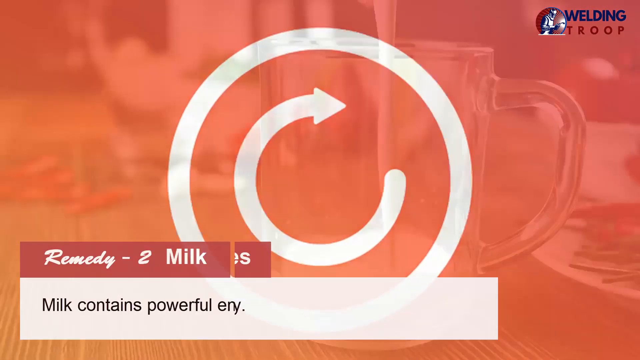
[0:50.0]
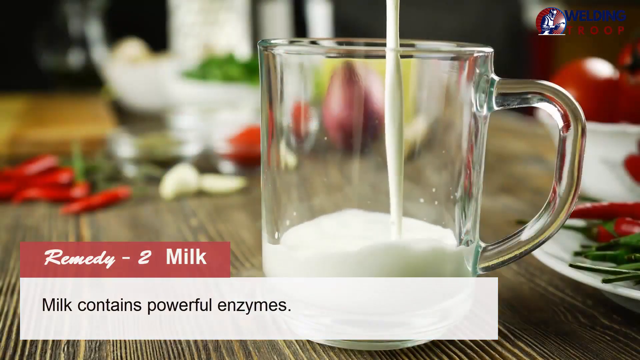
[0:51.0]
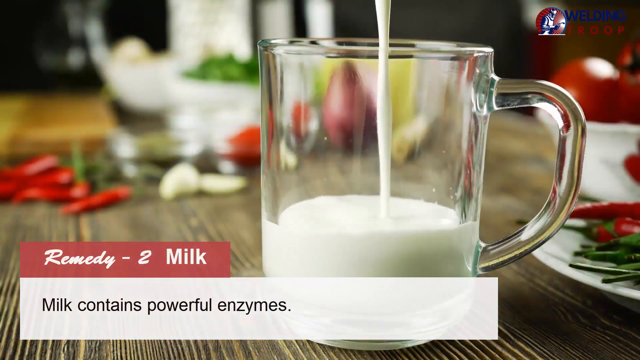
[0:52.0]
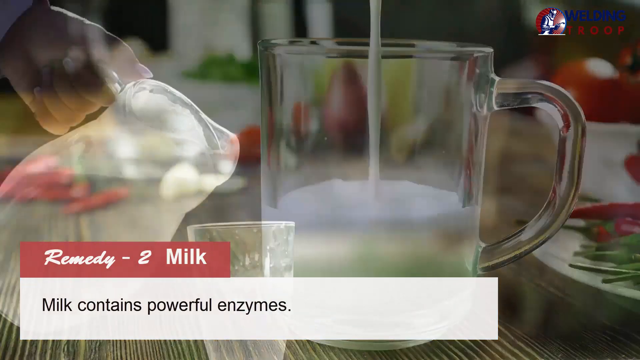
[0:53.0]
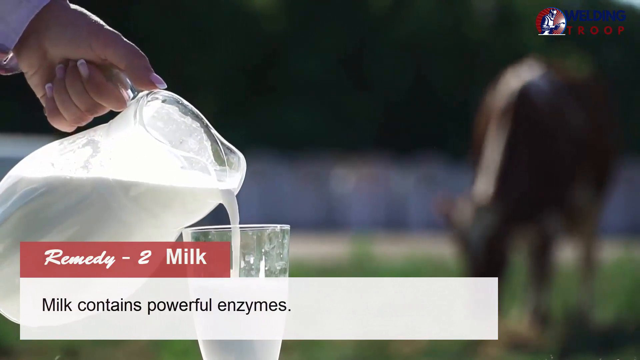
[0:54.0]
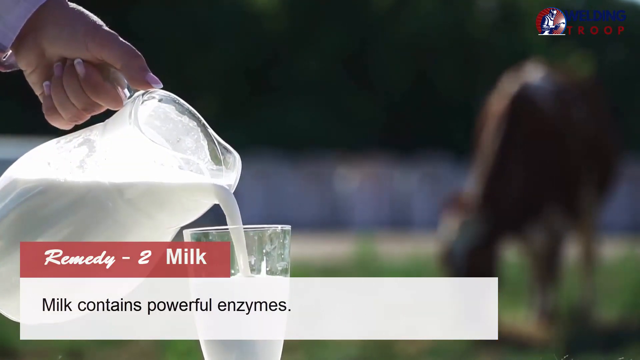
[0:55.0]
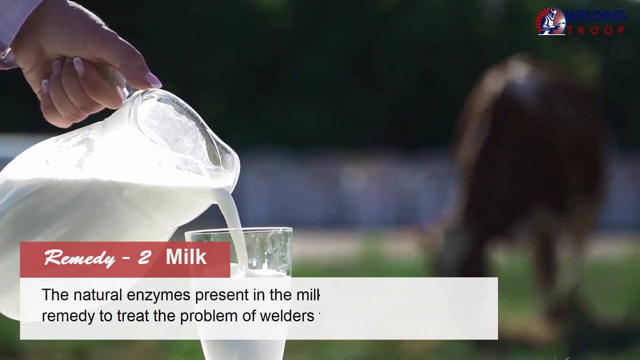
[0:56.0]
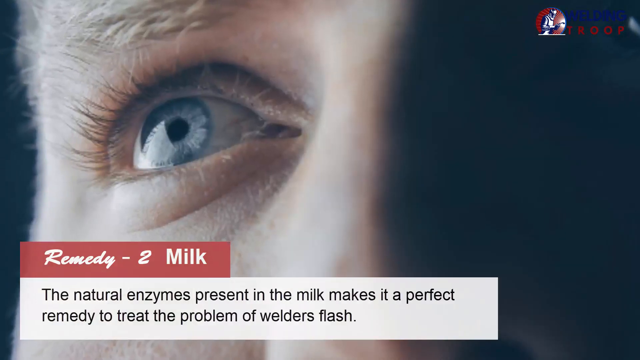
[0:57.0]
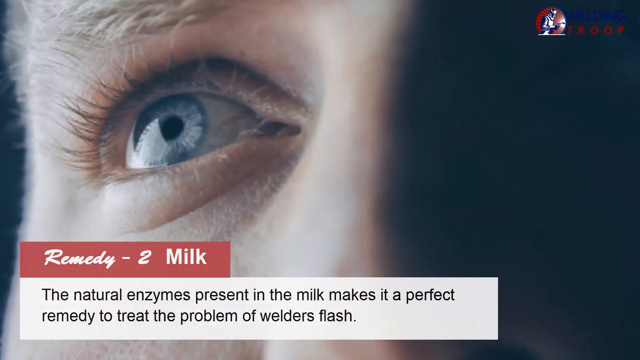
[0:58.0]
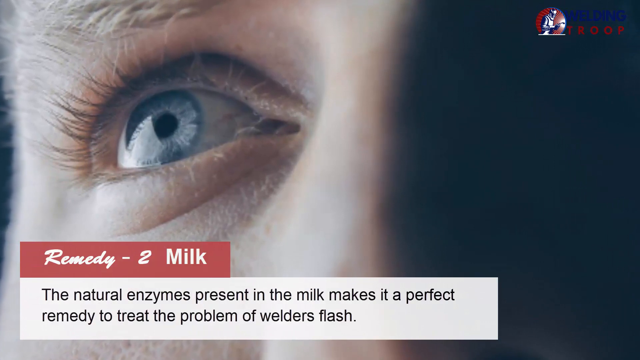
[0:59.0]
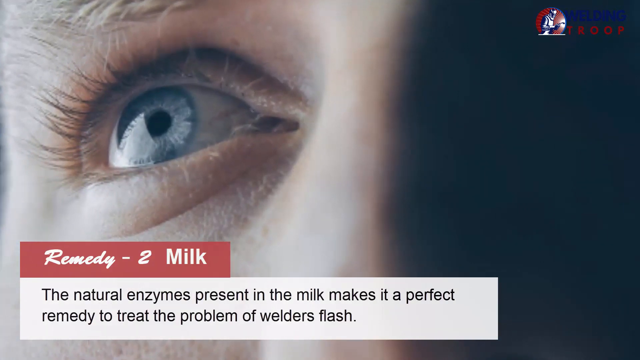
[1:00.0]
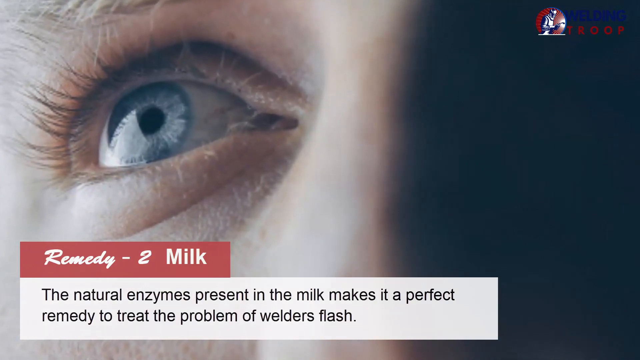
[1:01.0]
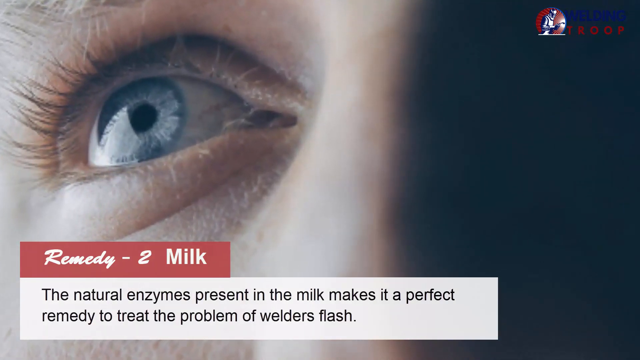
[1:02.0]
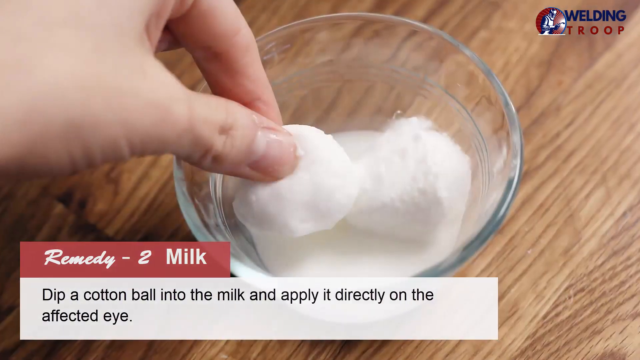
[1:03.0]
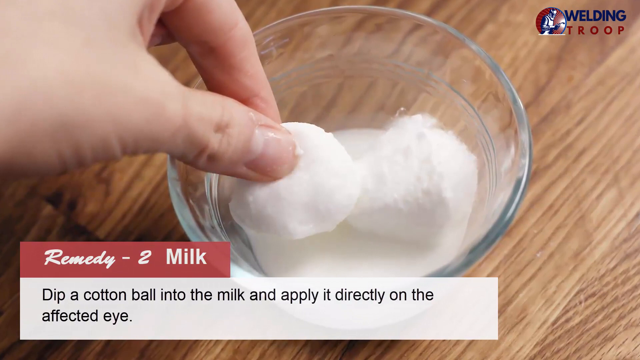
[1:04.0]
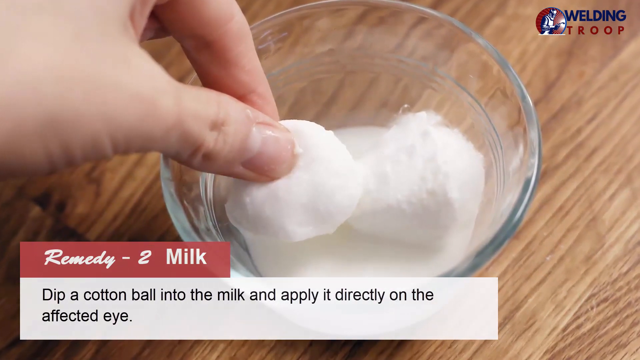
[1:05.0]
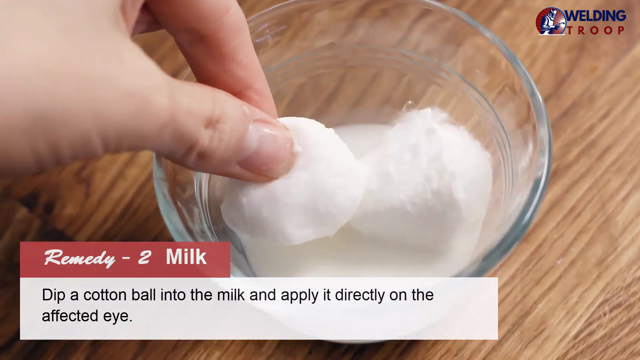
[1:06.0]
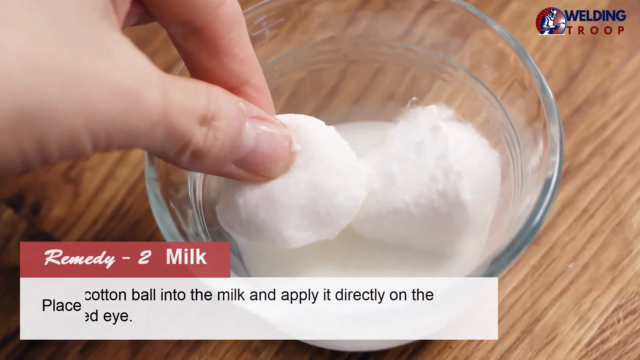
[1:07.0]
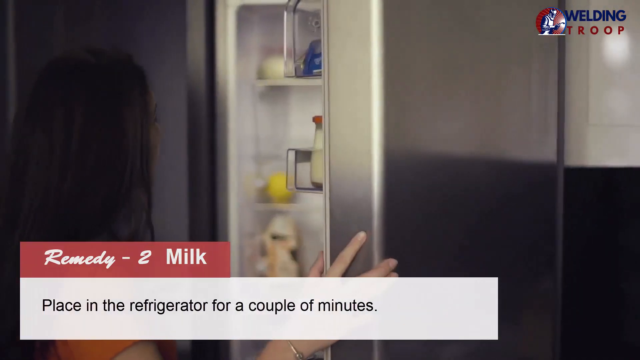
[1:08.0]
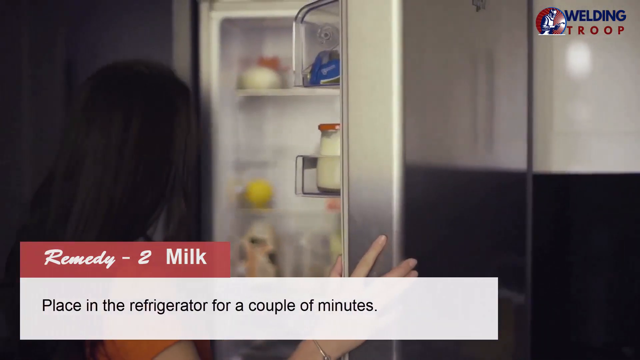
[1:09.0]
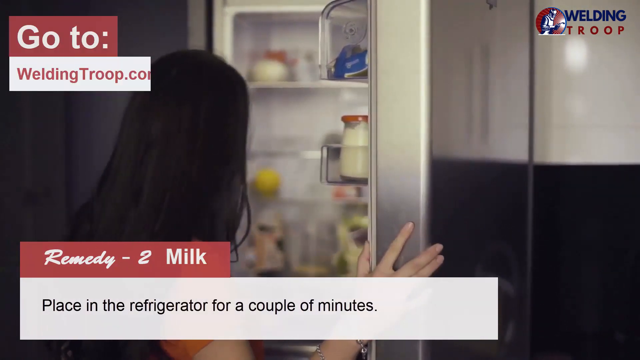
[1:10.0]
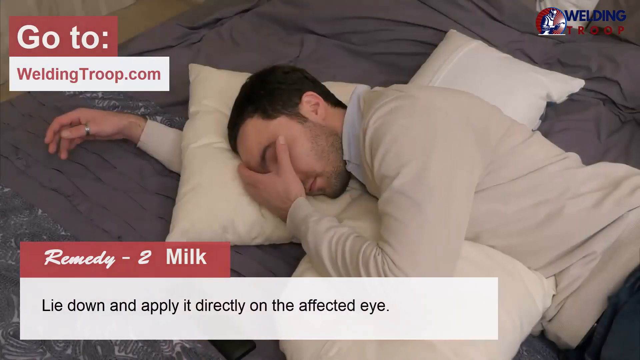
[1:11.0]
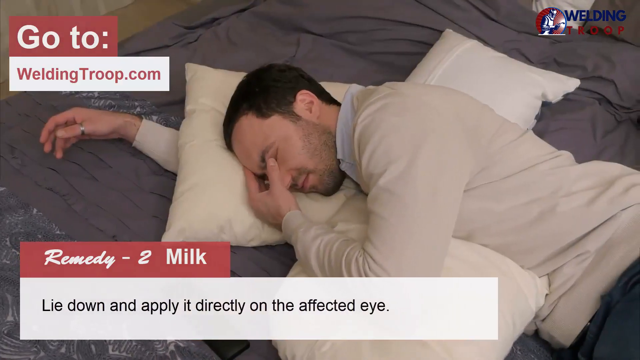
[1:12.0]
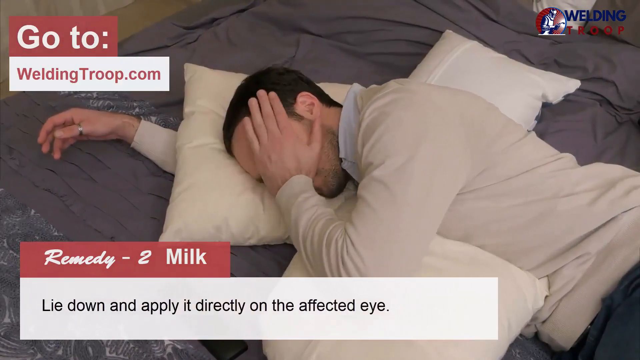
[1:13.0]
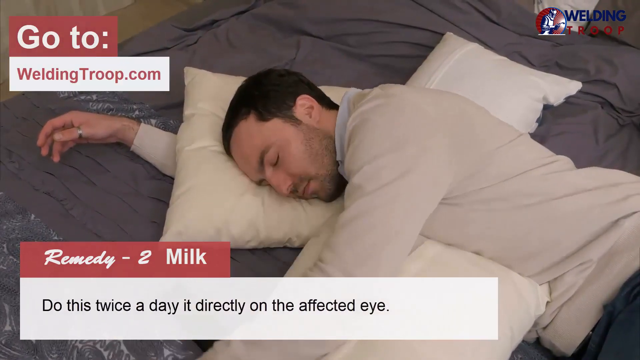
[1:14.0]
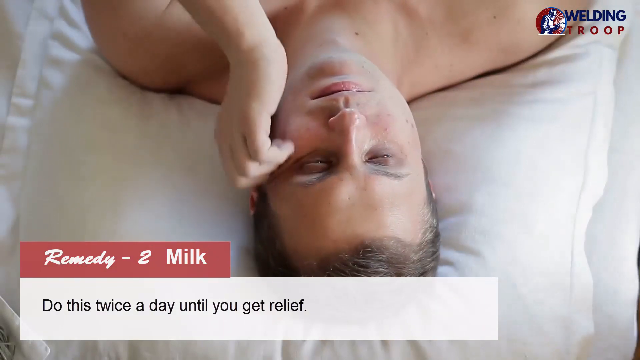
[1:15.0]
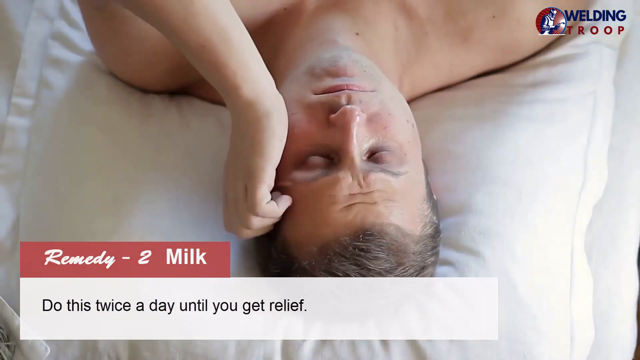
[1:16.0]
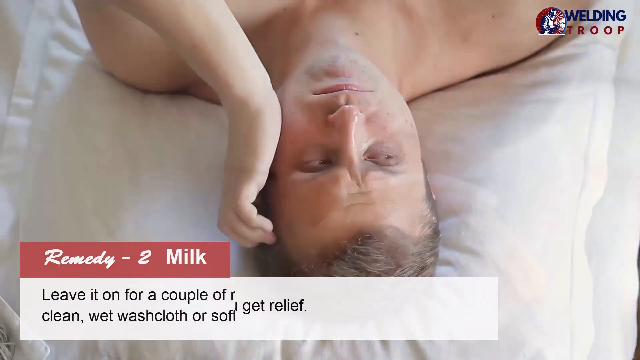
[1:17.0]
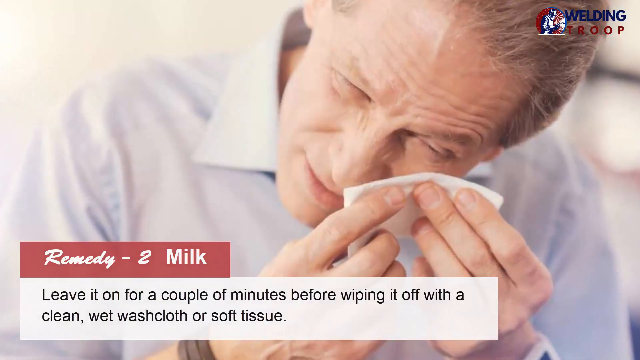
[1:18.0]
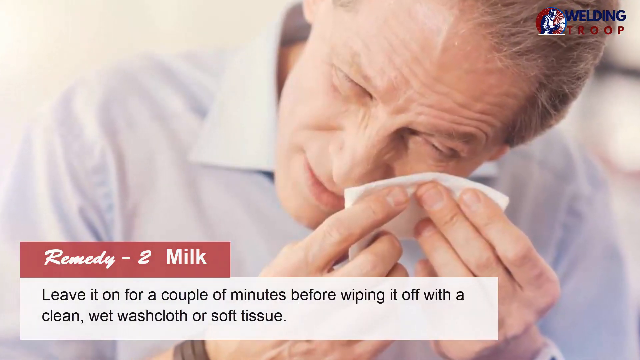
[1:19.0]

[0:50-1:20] Milk is poured into a glass mug, with the text "remedy two milk" and "Milk contains powerful enzymes." A cup and a pitcher filled with milk appear, and a female hand with French manicure nails pours milk from the pitcher into the cup. Over a picture of an eye, text reads "the natural enzymes present in milk makes it a perfect remedy to treat the problem of the welder's flash." A cotton swab is placed into a cup of milk, with the text "dip a cotton ball into milk and apply it directly on the affected eye." A woman opens a refrigerator as text instructs placing it in the refrigerator for a couple of minutes. A man lies on his bed with his head on a pillow, with the text "lie down and apply it directly on the affected eye." The video switches to another man laying down, with the text "do this twice a day until you get relief."